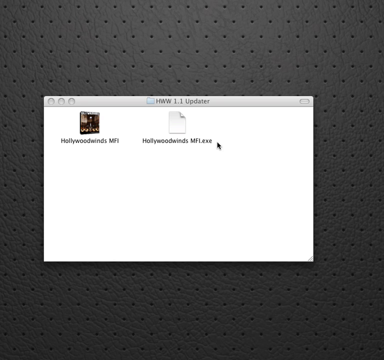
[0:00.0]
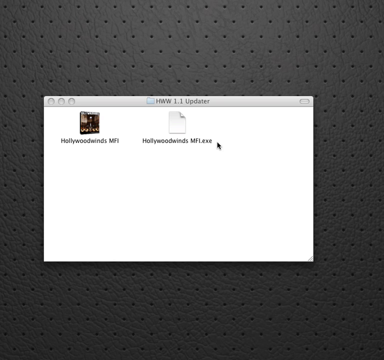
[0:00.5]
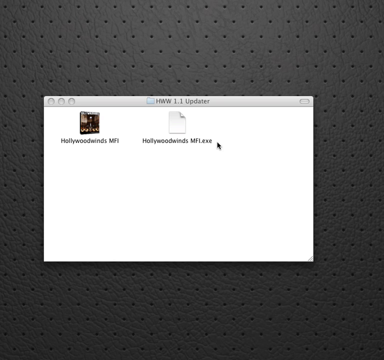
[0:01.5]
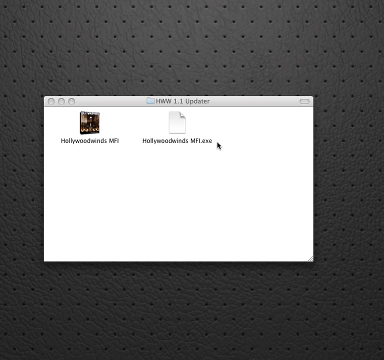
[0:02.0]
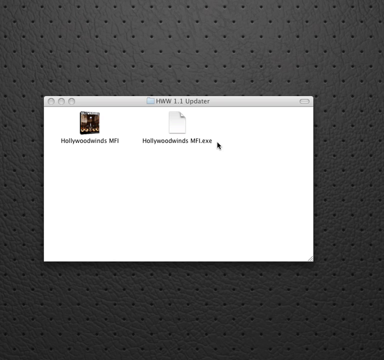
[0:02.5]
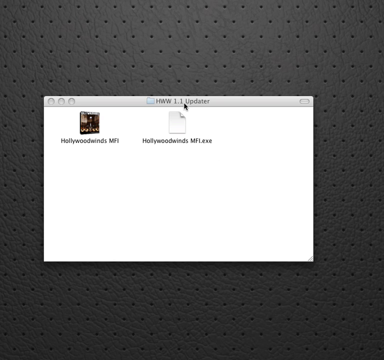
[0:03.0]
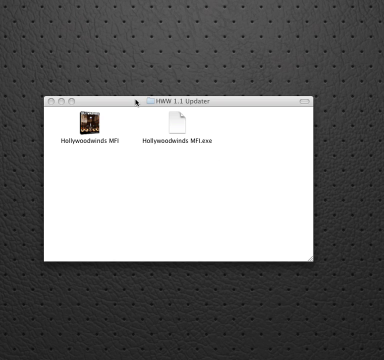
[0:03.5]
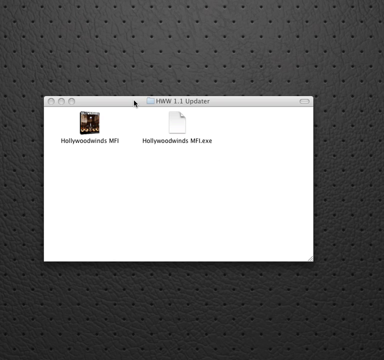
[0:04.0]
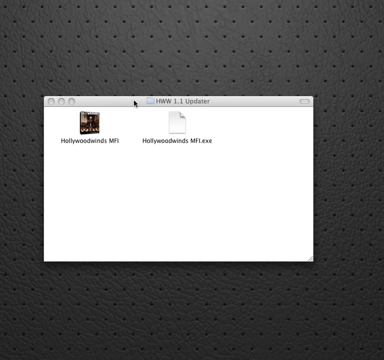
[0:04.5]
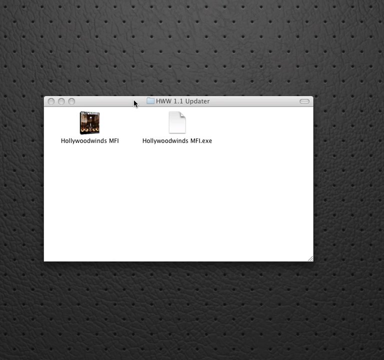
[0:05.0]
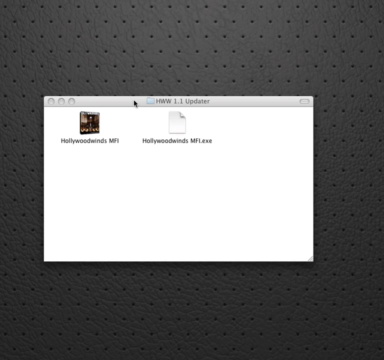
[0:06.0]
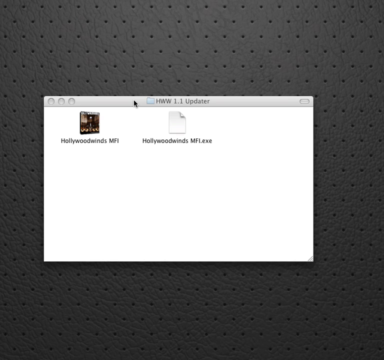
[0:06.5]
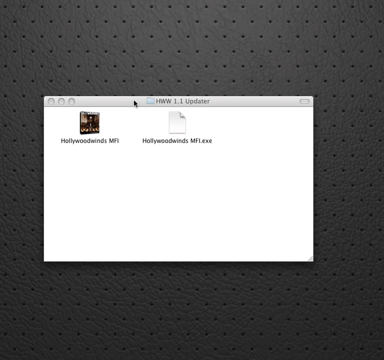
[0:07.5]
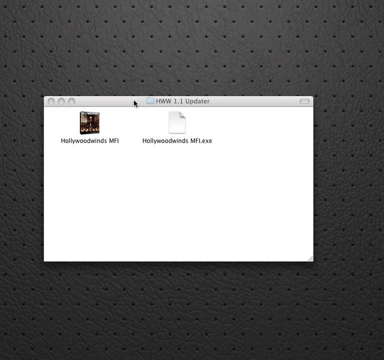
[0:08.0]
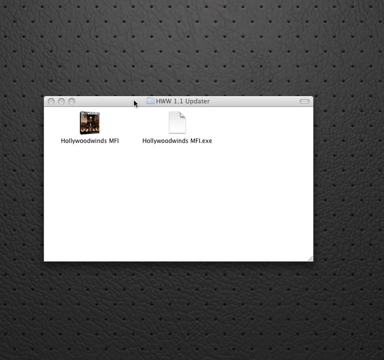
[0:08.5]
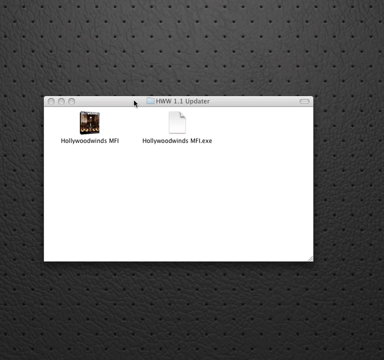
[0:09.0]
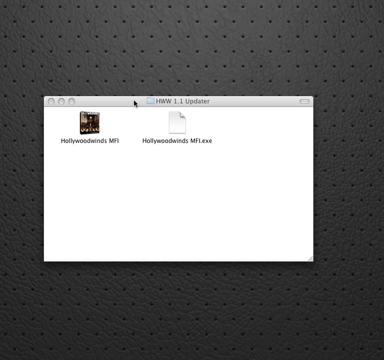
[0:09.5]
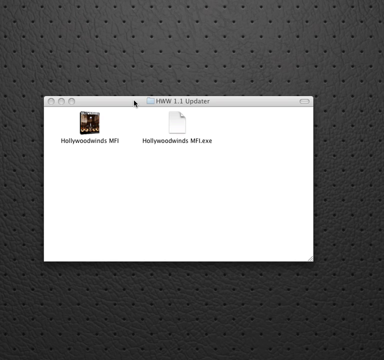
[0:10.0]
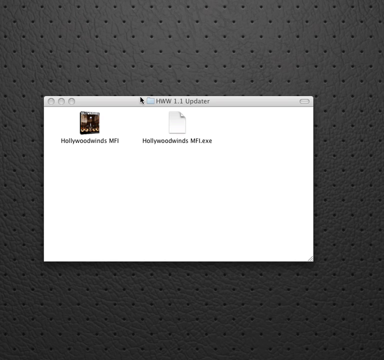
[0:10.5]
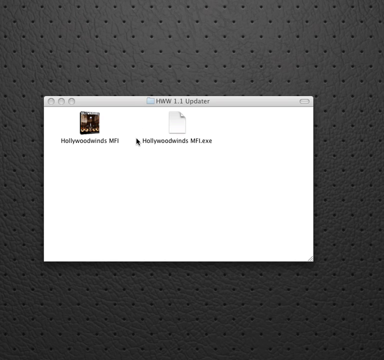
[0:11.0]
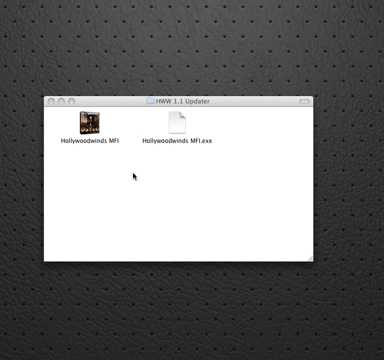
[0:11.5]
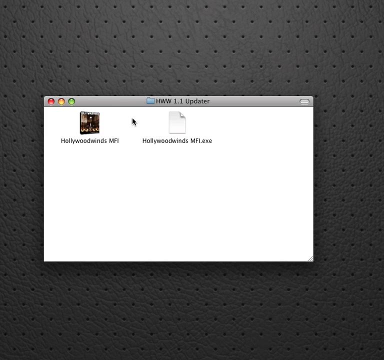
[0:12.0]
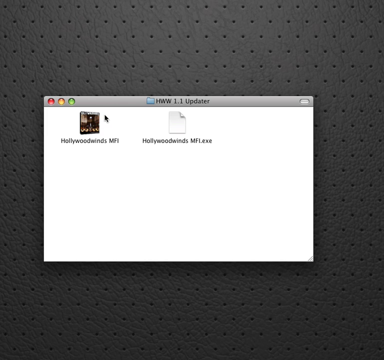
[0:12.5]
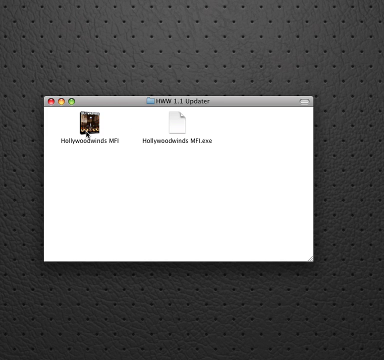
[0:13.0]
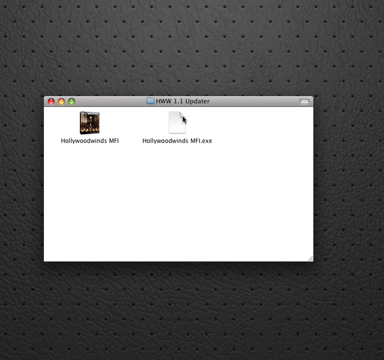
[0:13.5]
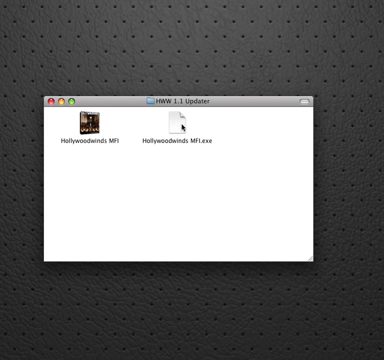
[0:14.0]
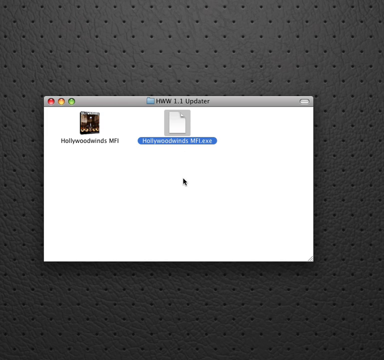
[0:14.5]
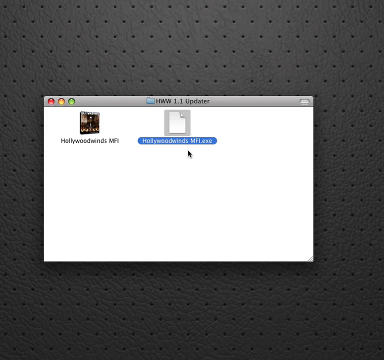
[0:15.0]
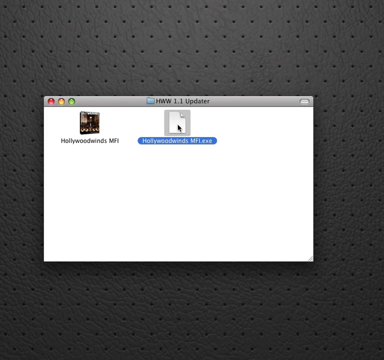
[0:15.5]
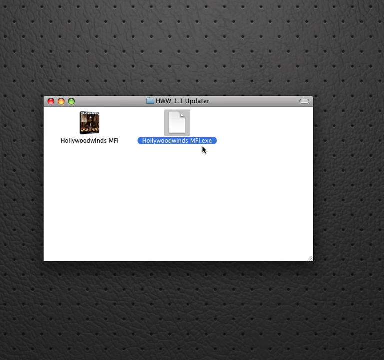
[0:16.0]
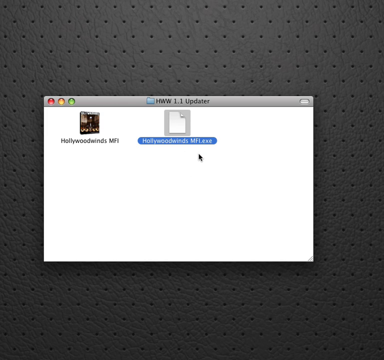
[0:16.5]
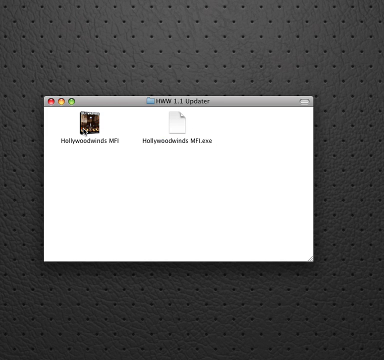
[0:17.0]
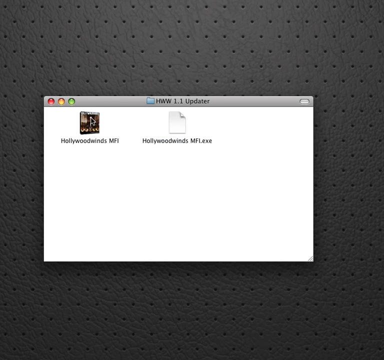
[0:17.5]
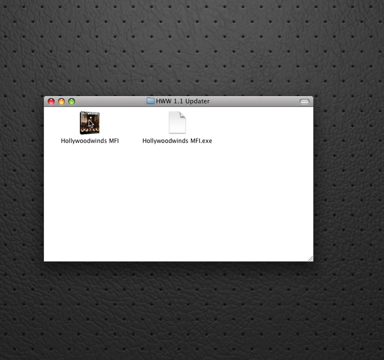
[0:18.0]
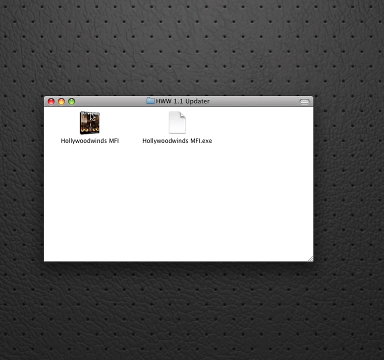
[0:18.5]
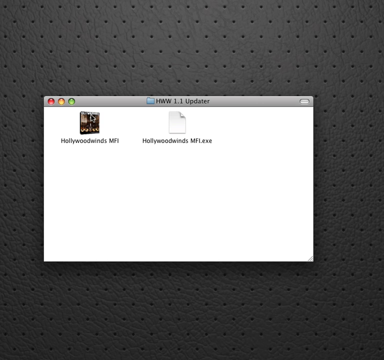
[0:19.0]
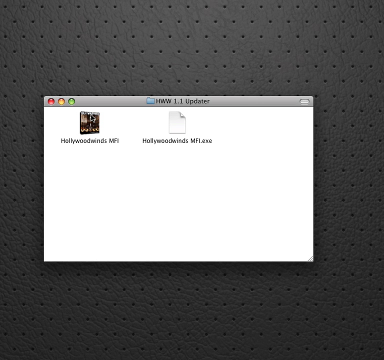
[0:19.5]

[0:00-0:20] Someone uses a cursor in a folder called HWW 1.1 updater. The cursor moves to a file called Hollywood WFNDS and then to another one, Hollywood WINS MFL; these are the only two files to choose from. The user clicks on the one on the left, Hollywood WFNDS. The cursor hovers over both files as if deciding, and the one on the right is highlighted; the file chosen in the end is Hollywood windsmfi.exe.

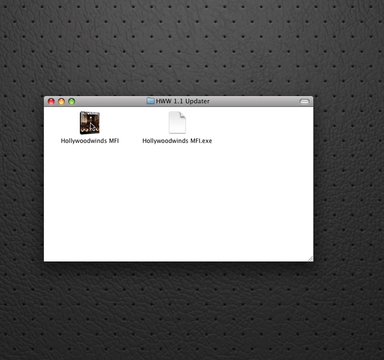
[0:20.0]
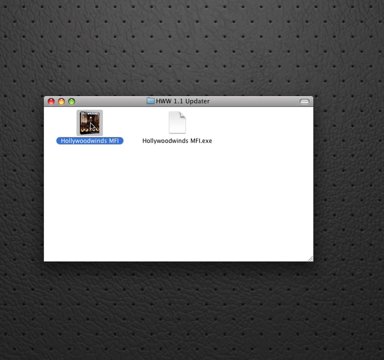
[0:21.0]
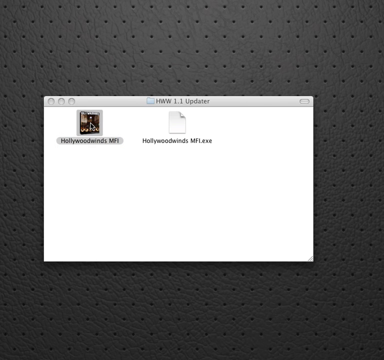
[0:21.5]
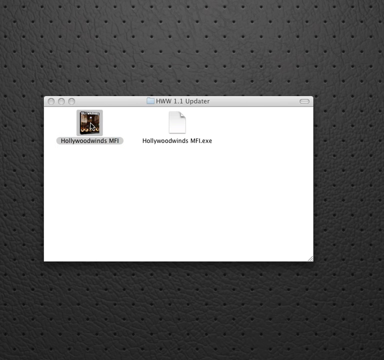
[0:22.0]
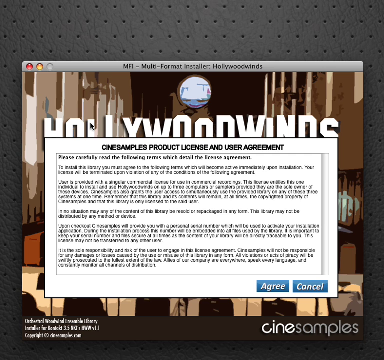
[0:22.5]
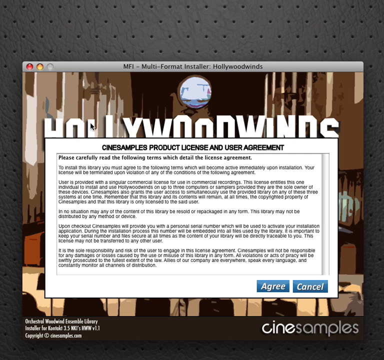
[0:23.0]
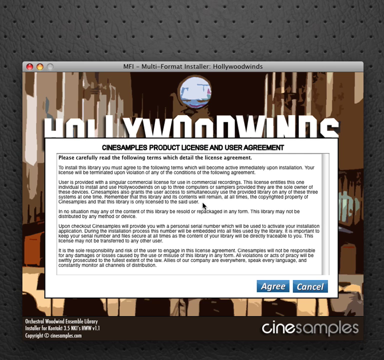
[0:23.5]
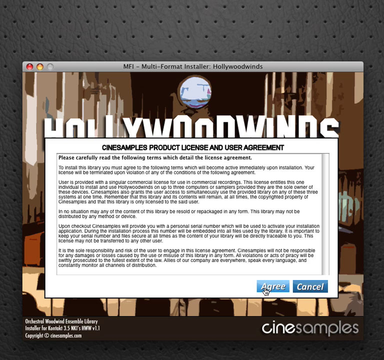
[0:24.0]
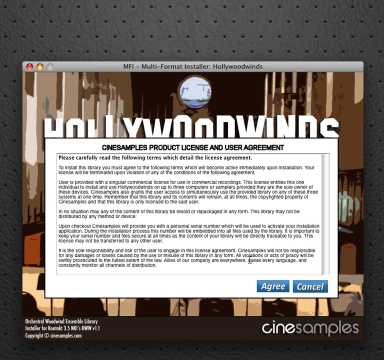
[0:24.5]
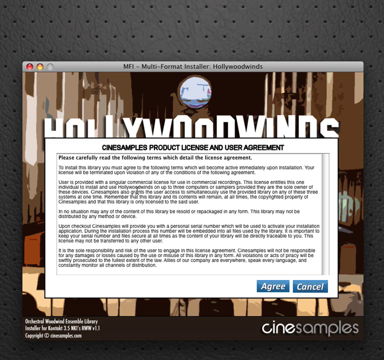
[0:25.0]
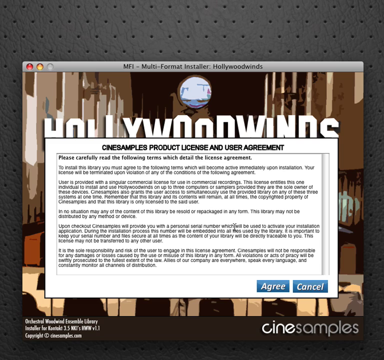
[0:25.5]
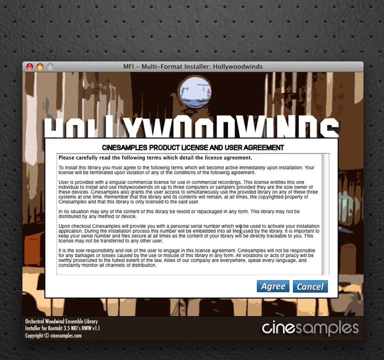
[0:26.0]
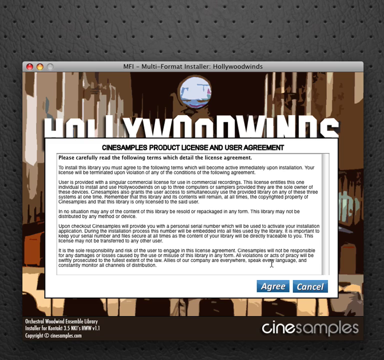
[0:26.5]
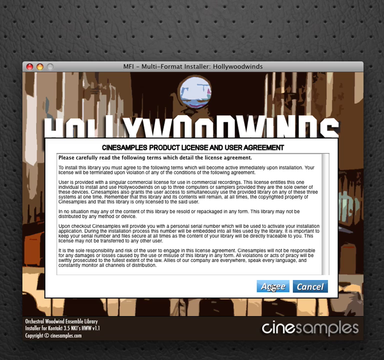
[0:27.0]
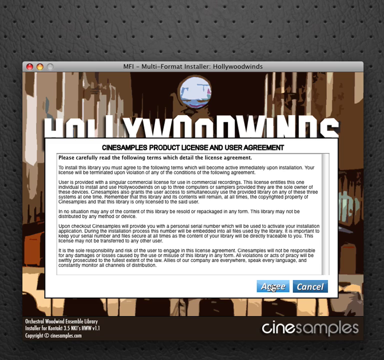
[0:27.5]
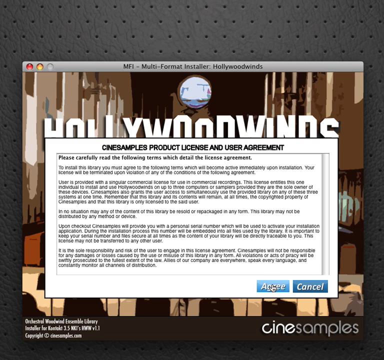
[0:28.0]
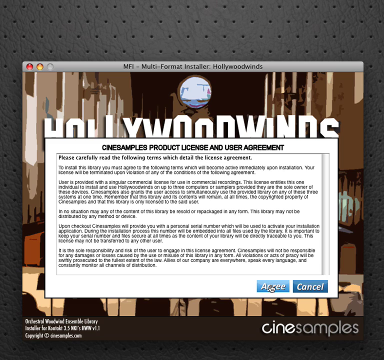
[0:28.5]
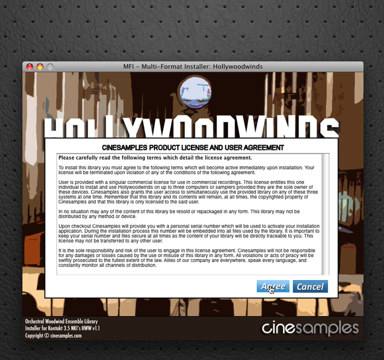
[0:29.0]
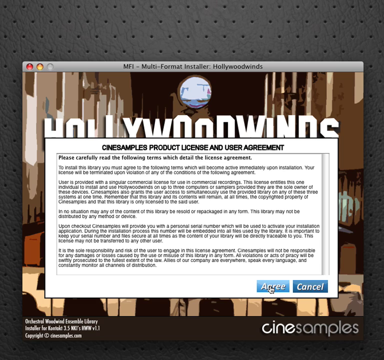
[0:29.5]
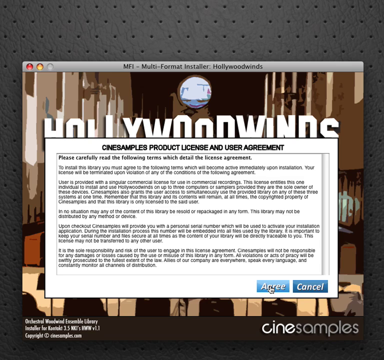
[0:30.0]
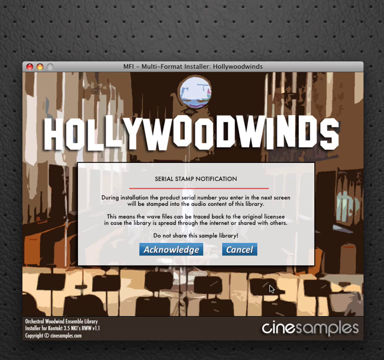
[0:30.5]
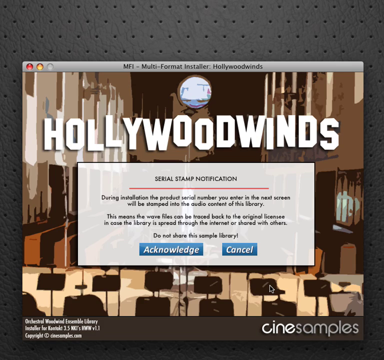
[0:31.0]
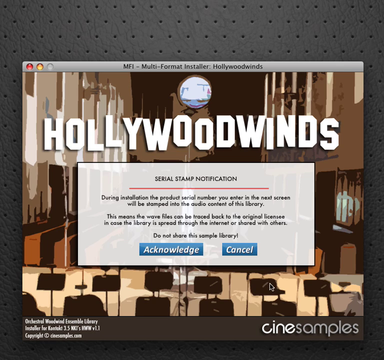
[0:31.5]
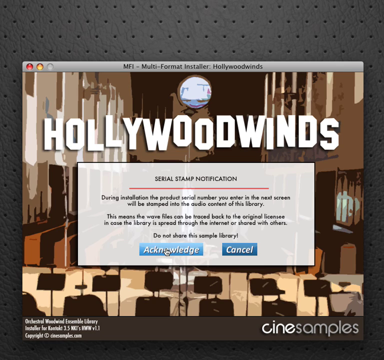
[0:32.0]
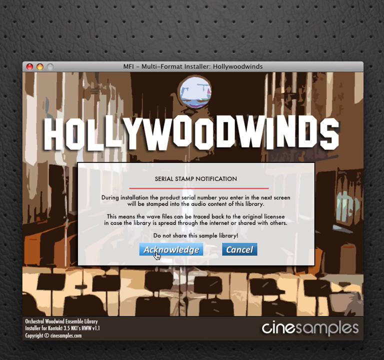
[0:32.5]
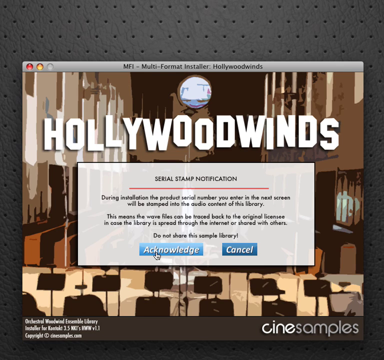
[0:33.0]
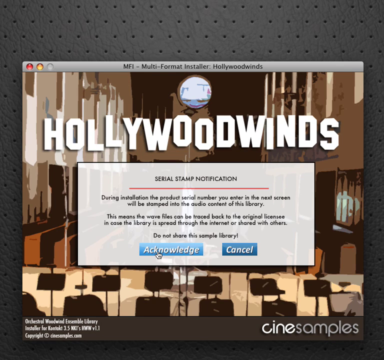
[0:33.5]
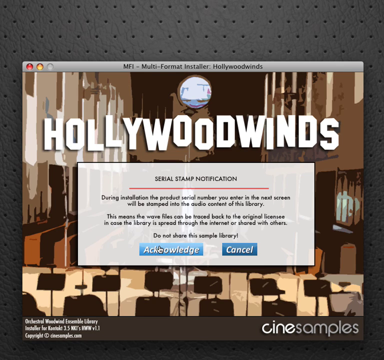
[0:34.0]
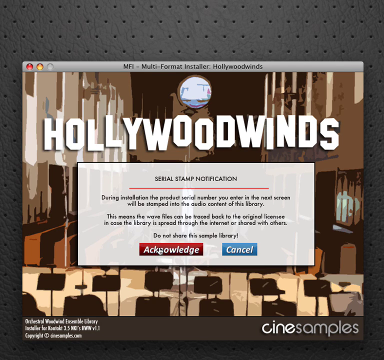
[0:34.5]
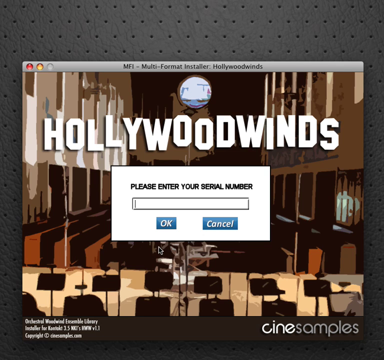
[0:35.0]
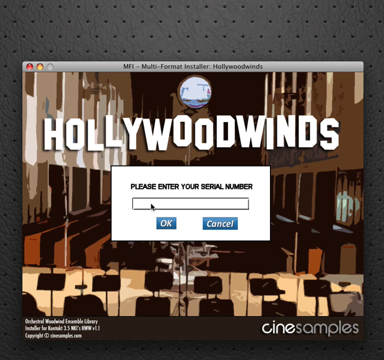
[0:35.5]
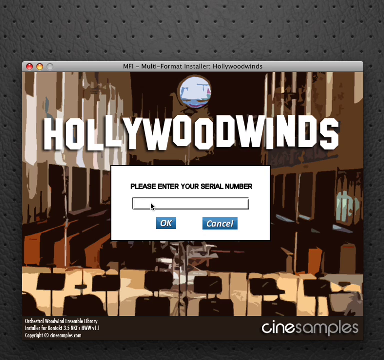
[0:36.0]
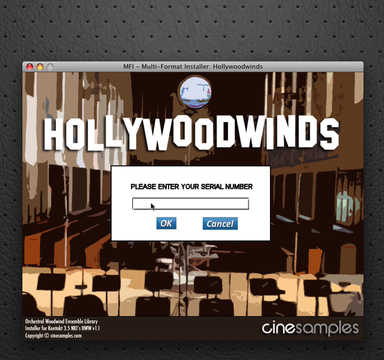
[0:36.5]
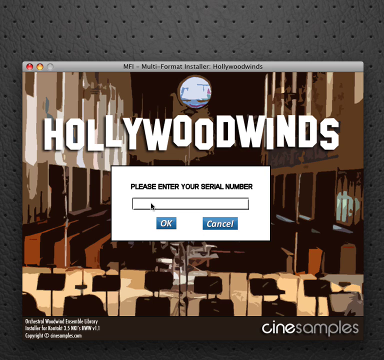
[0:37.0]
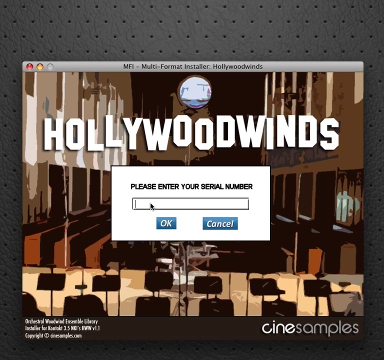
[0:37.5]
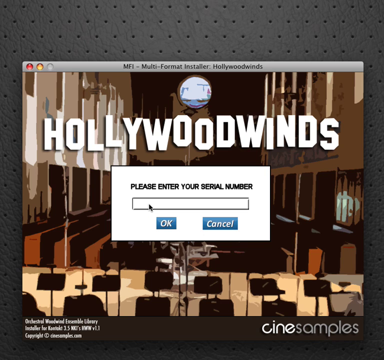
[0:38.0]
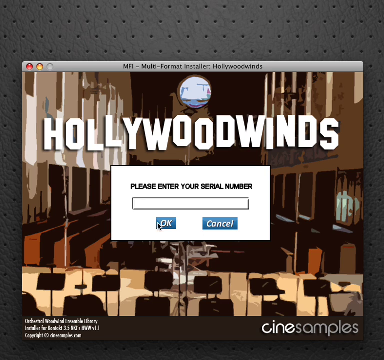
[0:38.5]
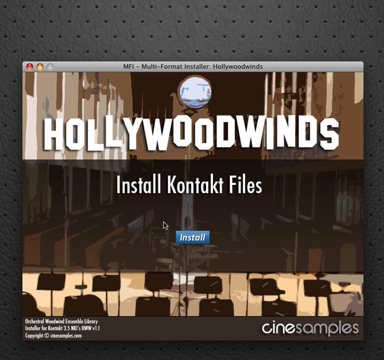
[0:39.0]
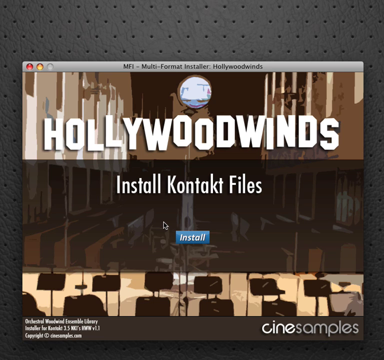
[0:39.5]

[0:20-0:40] The same two files are shown, and the user clicks the left file, the darker-looking one. A page appears reading "C-I-N-E-S samples product licensing user agreement" and "please carefully read the following terms which detail the license agreement." The user eventually presses agree with the cursor. The screen then shows a serial stamp notification stating "during installation, the product serial number you enter in the next screen will be stamped into the audio content of this library." The cursor moves over acknowledge and presses it. The user then enters a serial number, the cursor goes to okay, and then it moves over the kontakt files button and presses it.